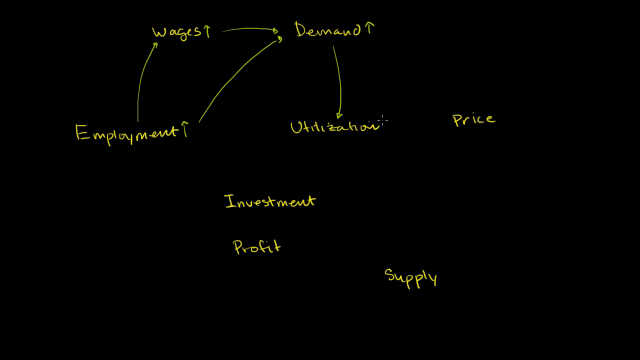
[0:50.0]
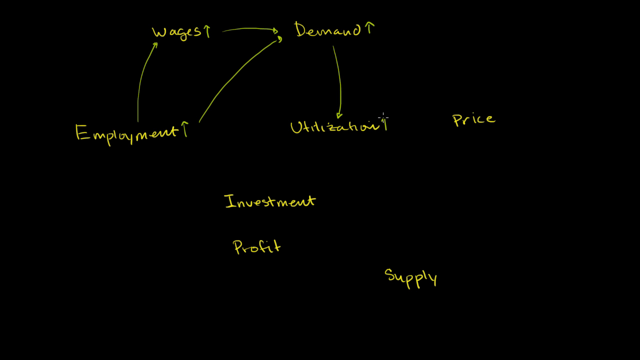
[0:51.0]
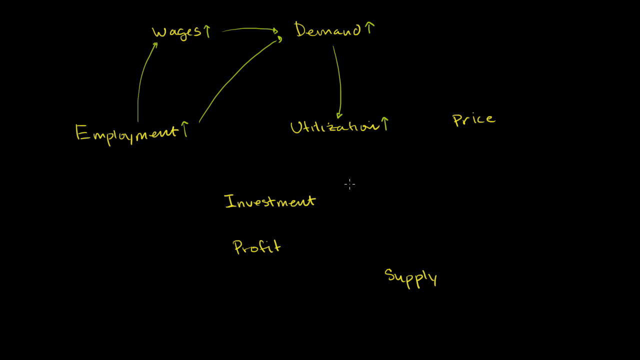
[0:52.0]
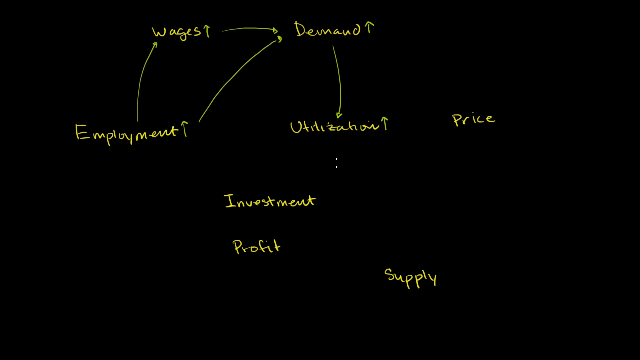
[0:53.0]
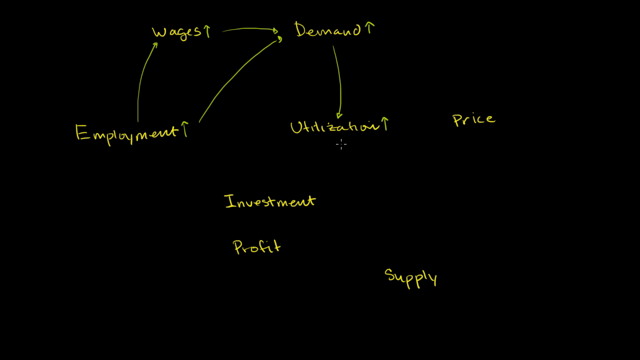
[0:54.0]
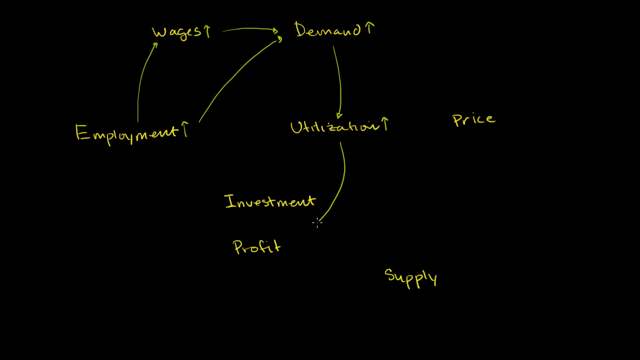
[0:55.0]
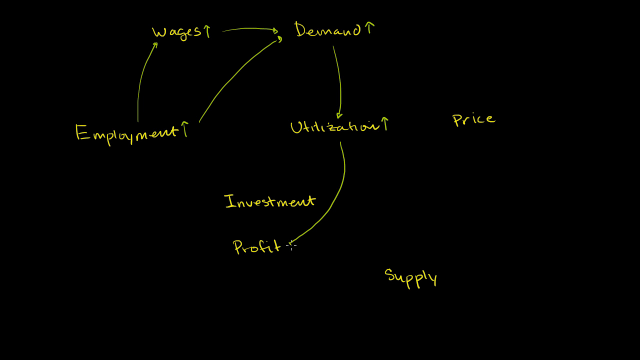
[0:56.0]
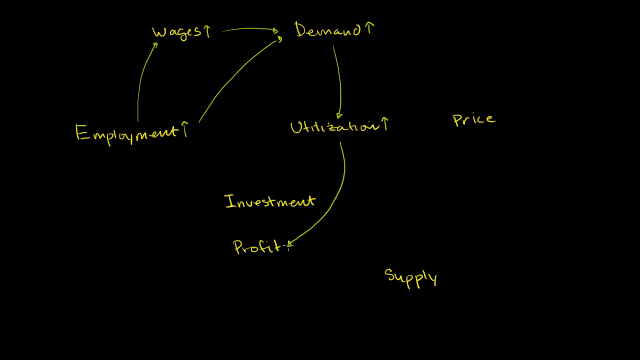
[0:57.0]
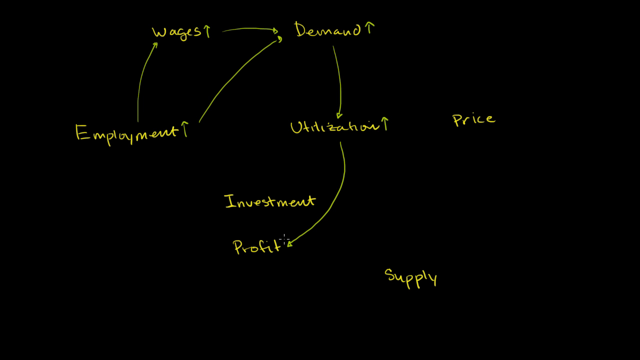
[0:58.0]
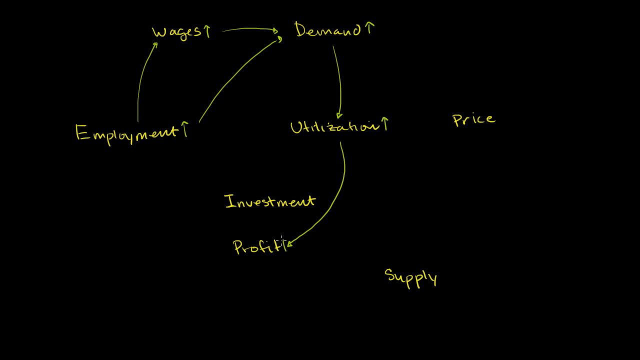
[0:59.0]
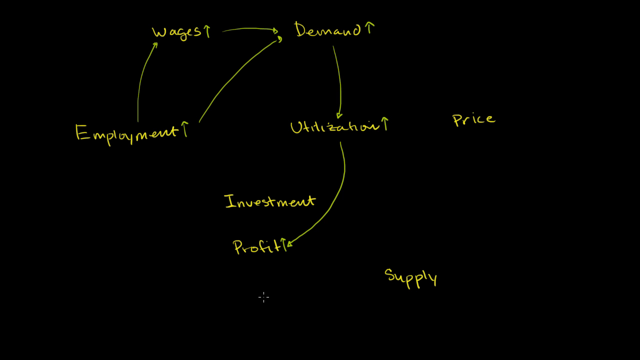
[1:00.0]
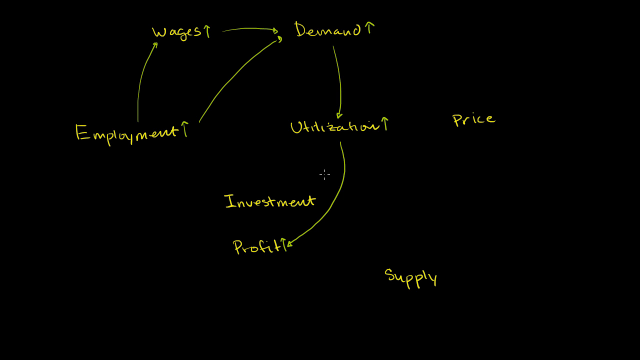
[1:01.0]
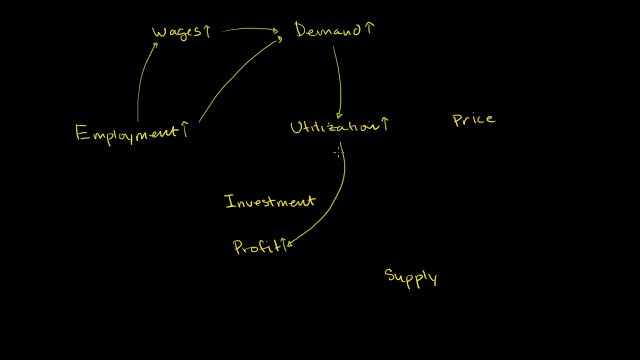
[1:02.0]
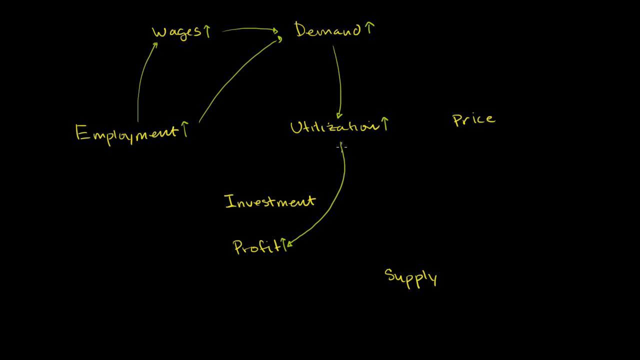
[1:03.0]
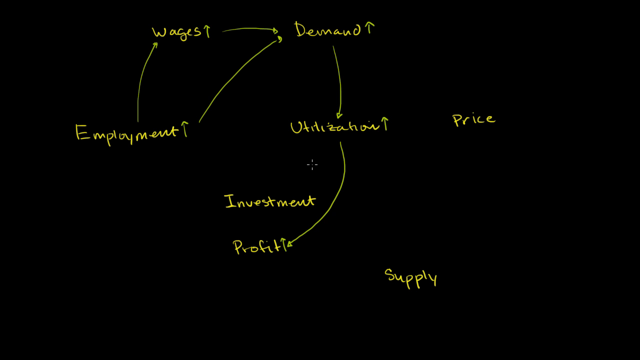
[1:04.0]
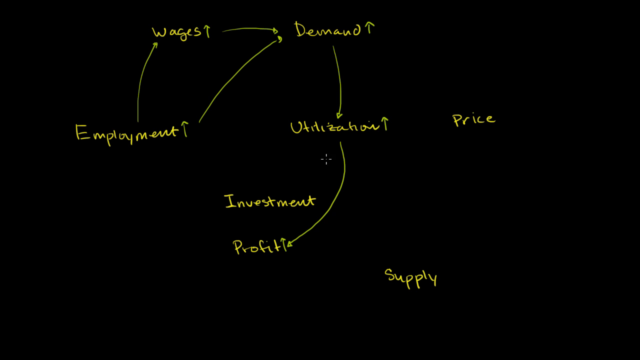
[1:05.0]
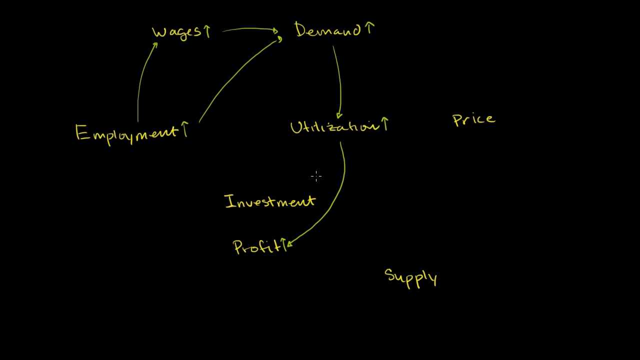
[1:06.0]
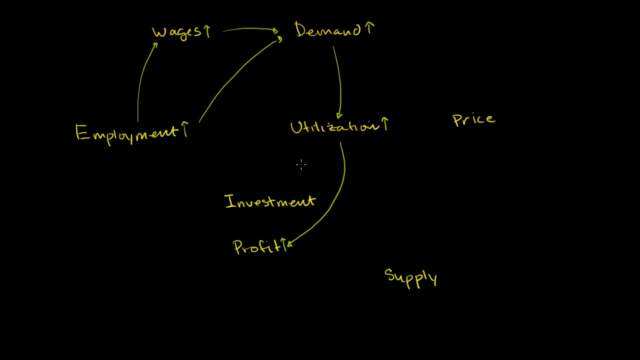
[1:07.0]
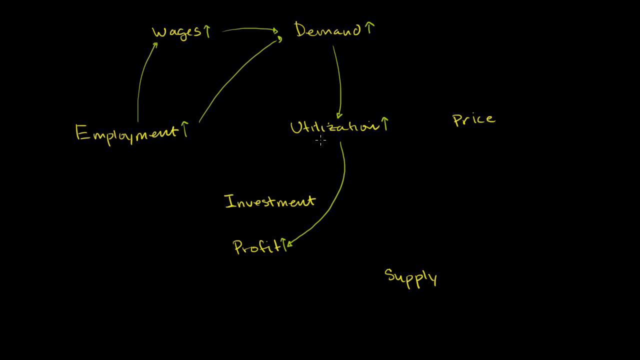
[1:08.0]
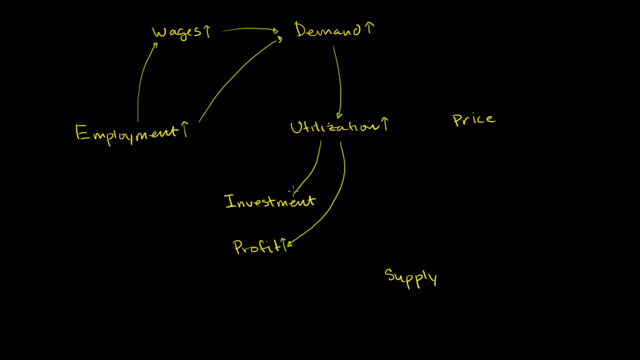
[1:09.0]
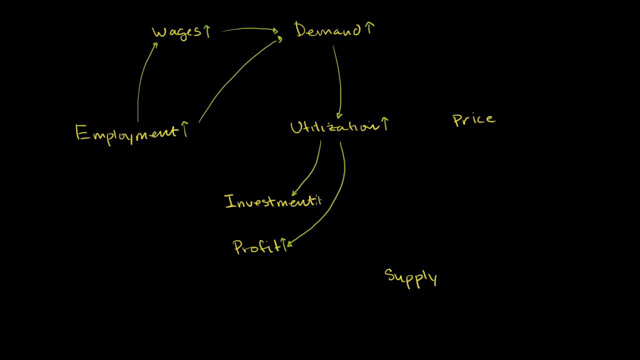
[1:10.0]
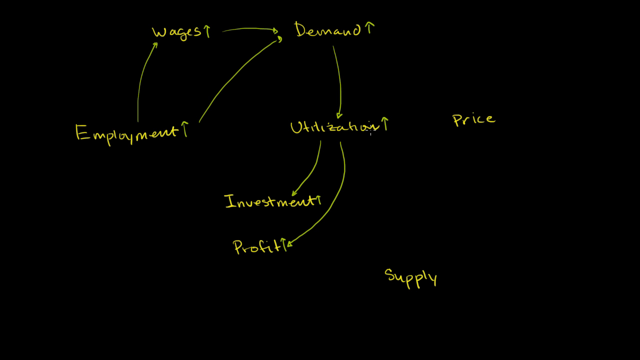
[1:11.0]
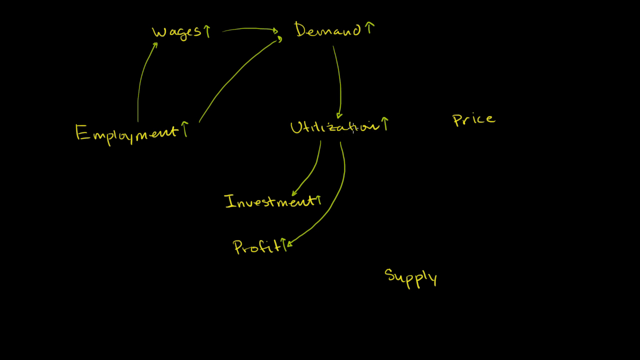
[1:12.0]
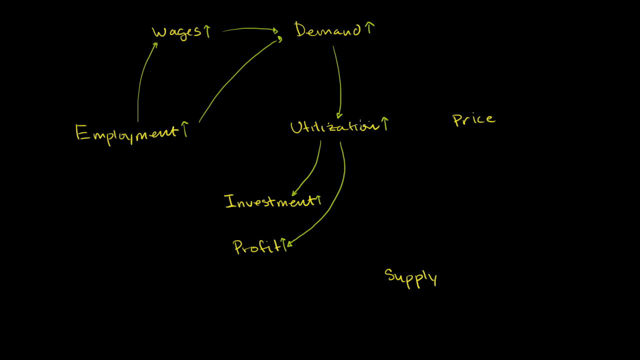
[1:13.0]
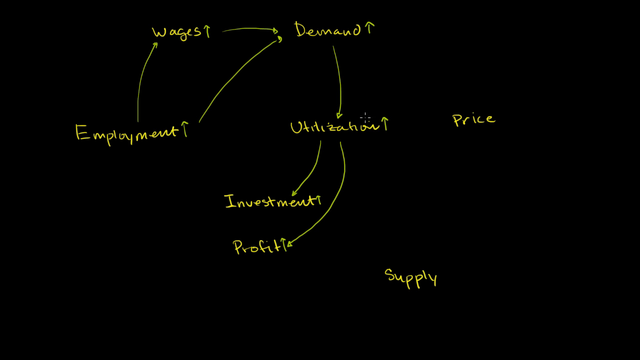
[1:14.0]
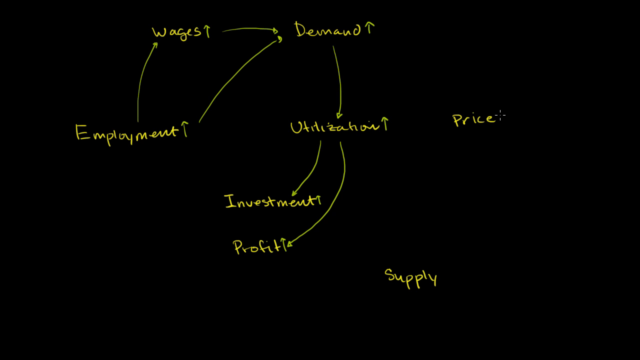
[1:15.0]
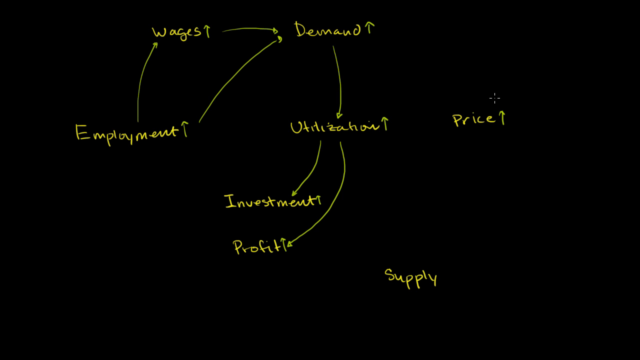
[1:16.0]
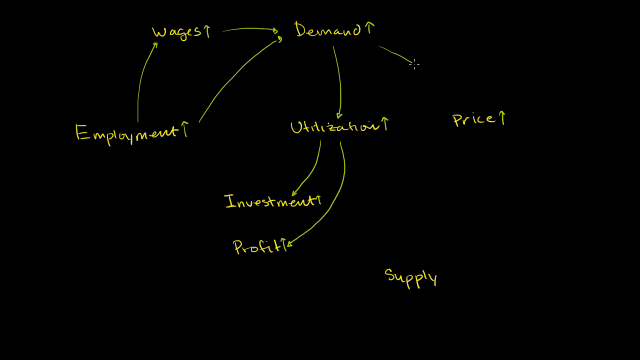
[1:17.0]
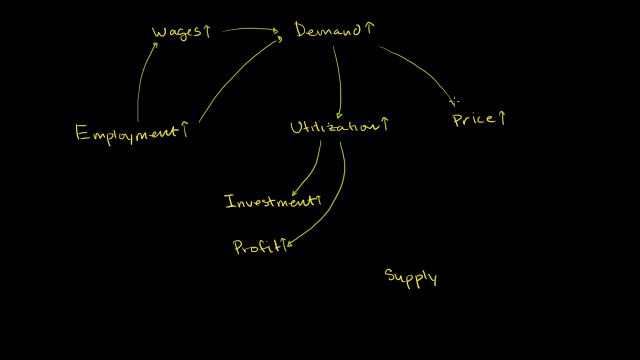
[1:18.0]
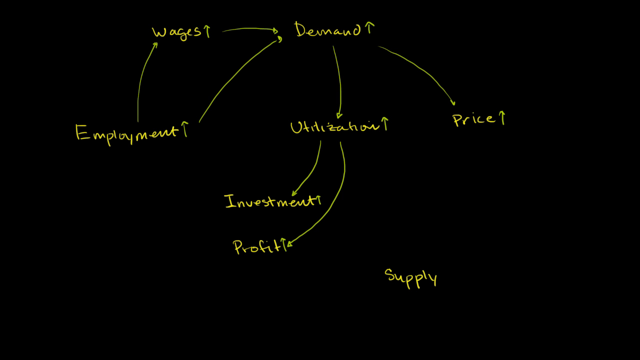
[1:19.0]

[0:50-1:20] The black screen shows yellow writing: "Wages" on the left and "Demand" in the middle on the top line; "Employment" on the left, "Utilization" in the middle and "Price" on the right below them; then "Investment," "Profit" below it, and "Supply" below to the right. "Utilization" now has an arrow pointing down to "Investment" and another pointing down to "Profit." "Employment" has arrows up to "Wages" and "Demand," "Wages" has an arrow to "Demand," and "Demand" has an arrow down to "Utilization." Each word with arrows coming off it also has a small upward-pointing arrow symbol next to it. The writing is neat.